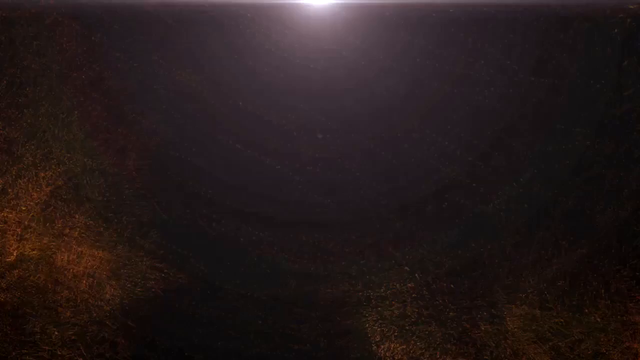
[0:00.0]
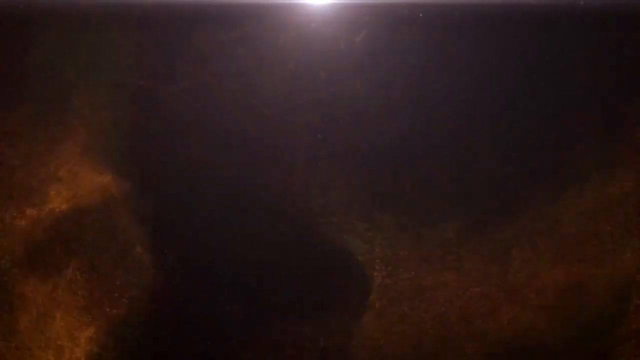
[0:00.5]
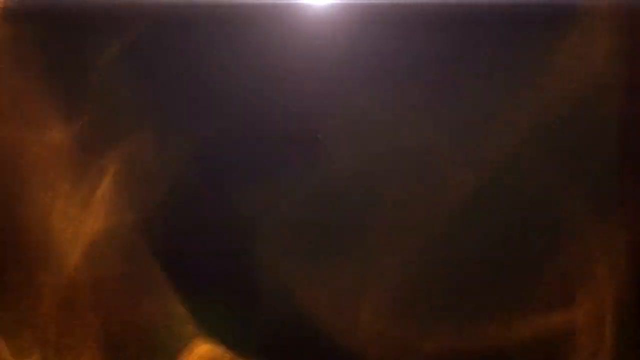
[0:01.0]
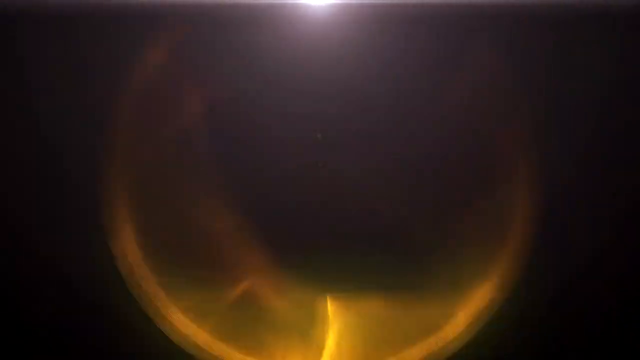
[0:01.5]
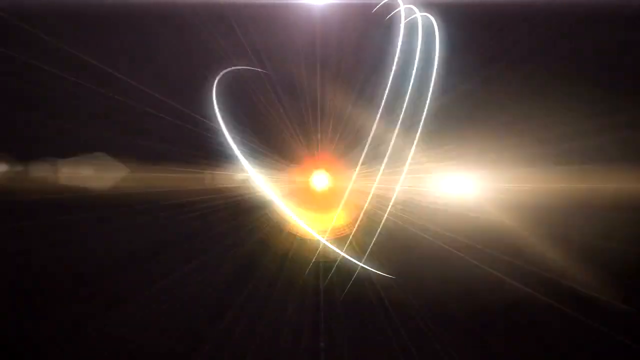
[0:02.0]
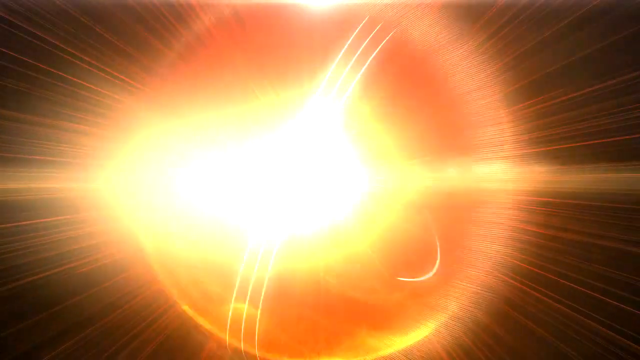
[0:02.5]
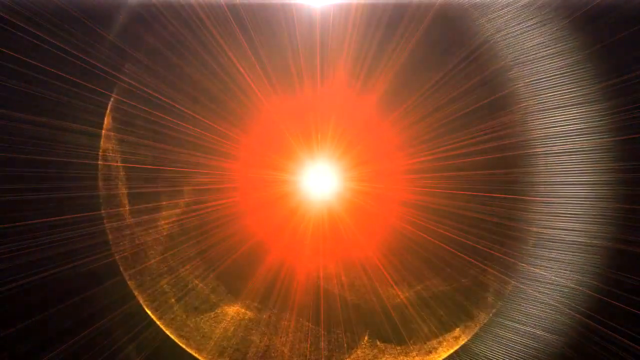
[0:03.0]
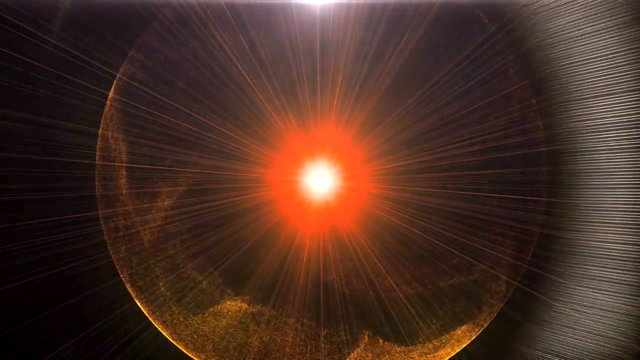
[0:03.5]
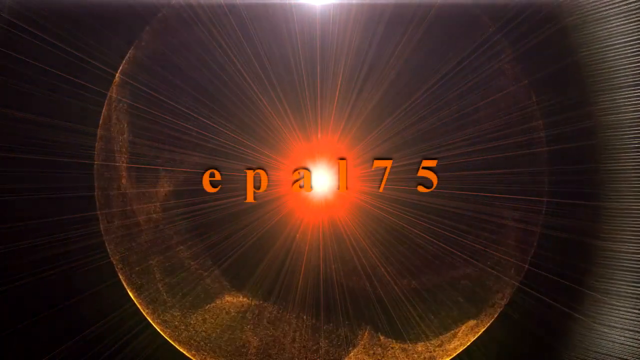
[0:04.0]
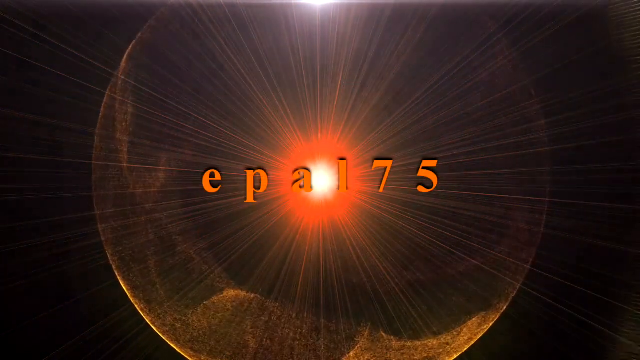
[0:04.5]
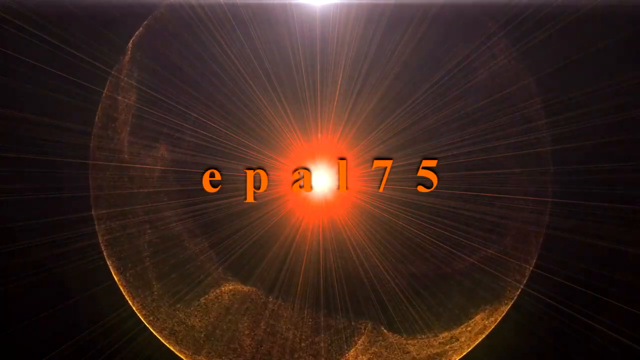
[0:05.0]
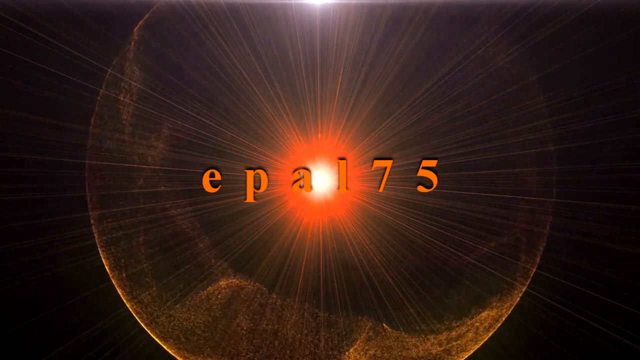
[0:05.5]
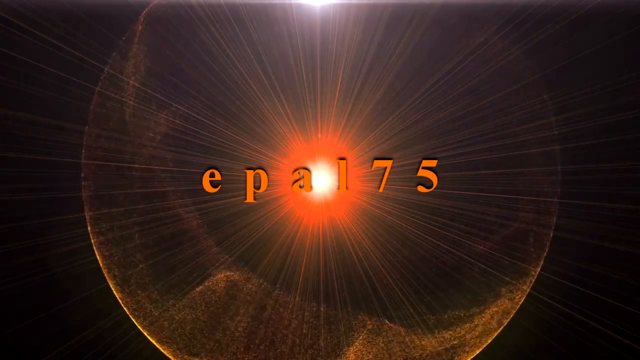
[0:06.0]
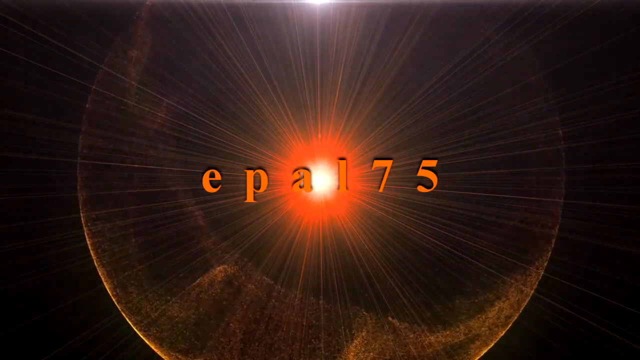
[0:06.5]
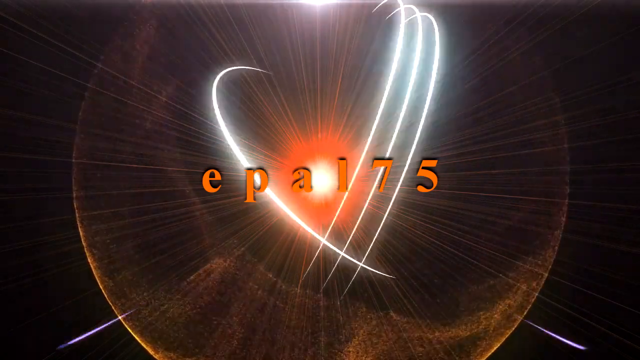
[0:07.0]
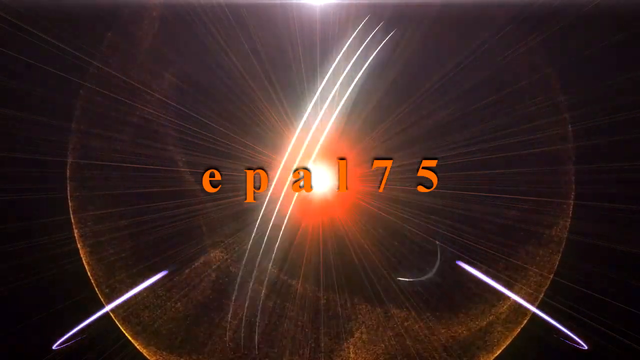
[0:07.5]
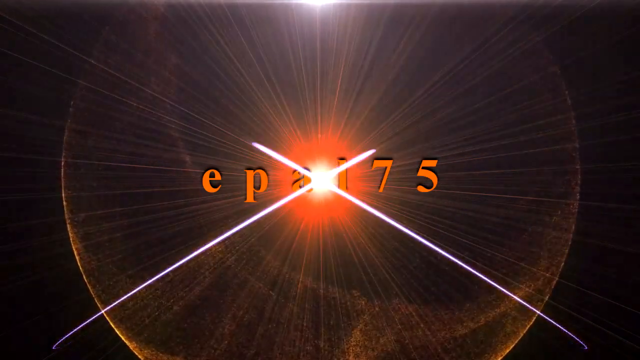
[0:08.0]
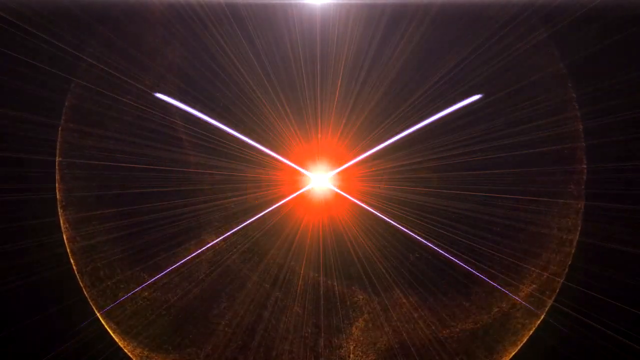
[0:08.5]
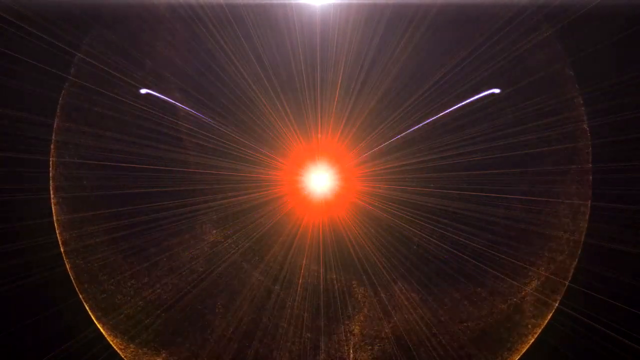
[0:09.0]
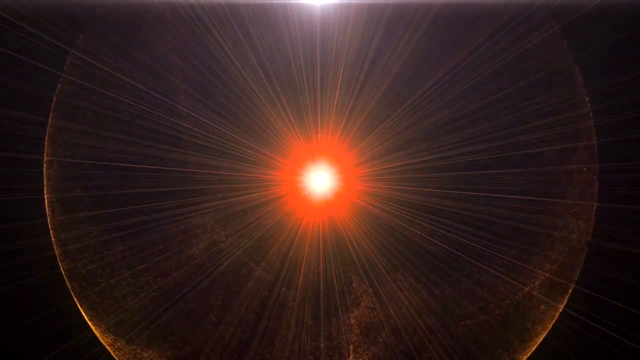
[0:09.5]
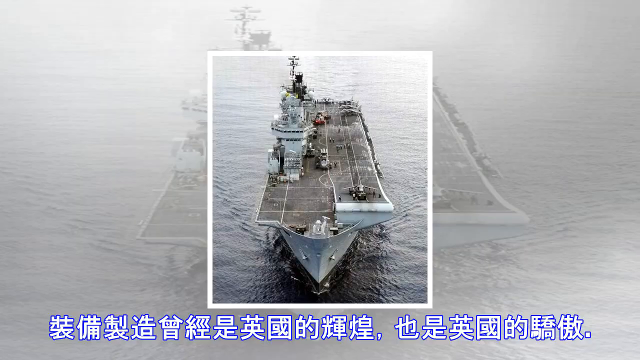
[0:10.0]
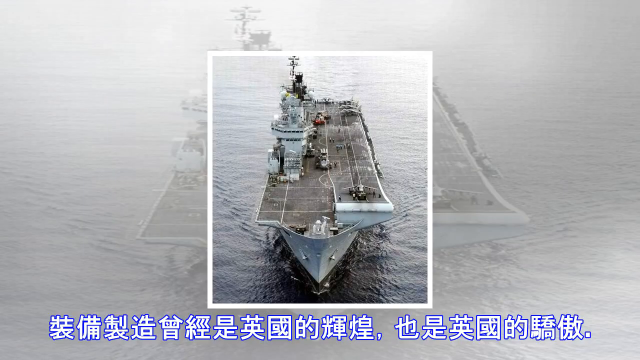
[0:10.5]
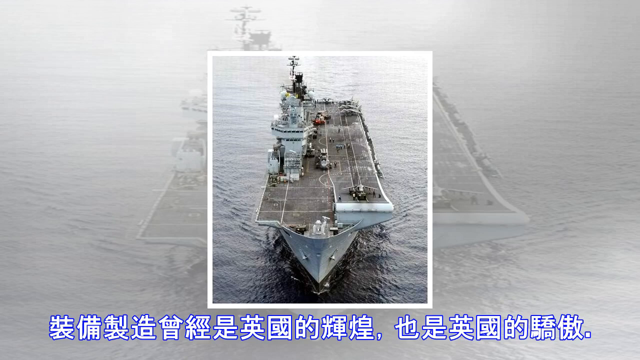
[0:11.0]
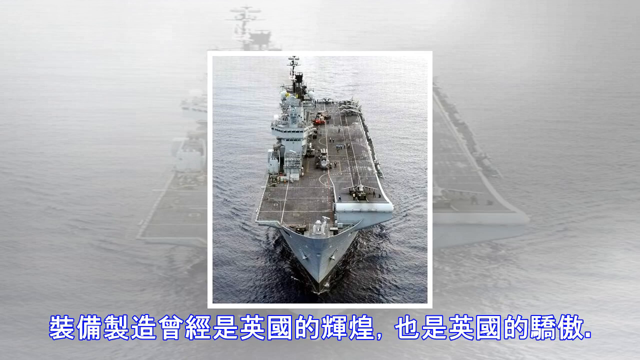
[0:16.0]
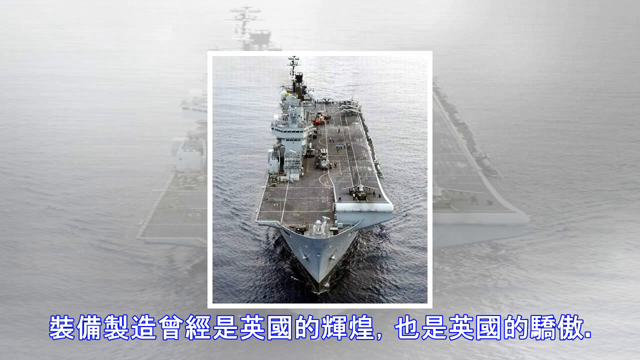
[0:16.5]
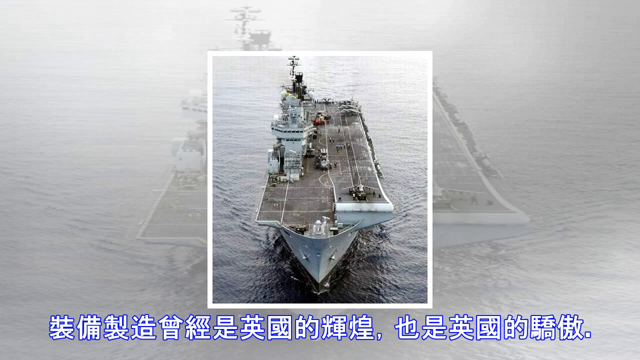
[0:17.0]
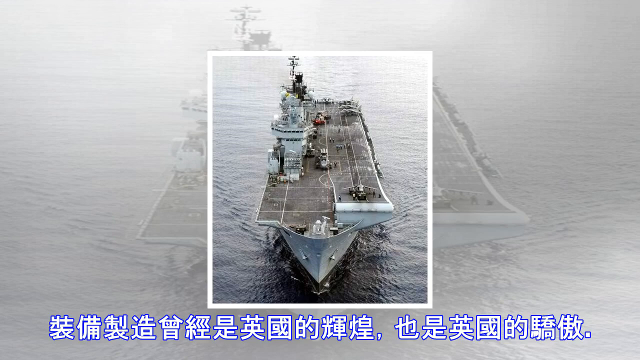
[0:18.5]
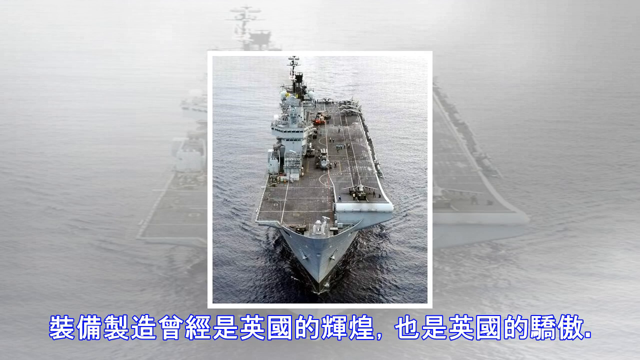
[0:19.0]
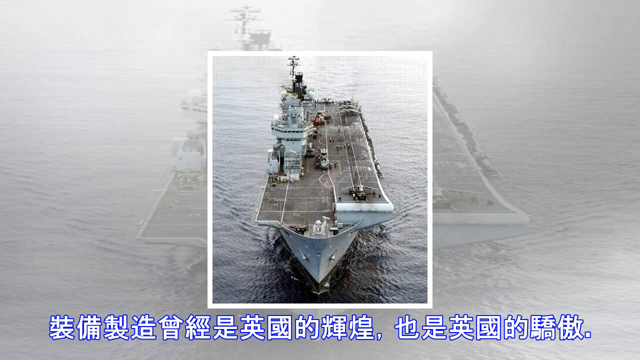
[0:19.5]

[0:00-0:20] A big light forms in the middle of the screen as a flash, and then the text "EPA-175" appears. White lines keep moving through the screen and swirling around its center. In the middle is a very bright white light; the next layer is a very light cream, and the following layer is a very bright red with lines coming off it like sun rays. Behind it is the outline of a circle that could resemble the globe. The video then pans to a mainly gray ship out in the middle of the ocean, apparently some sort of military vessel. On top of the ship is a landing area for airplanes to land and take off. On the left-hand side of the vessel is an area apparently for flight personnel to see what might be coming in, with a lot of glass around half of this building. On the right-hand side is a plane that could be starting to take off, with people standing around it.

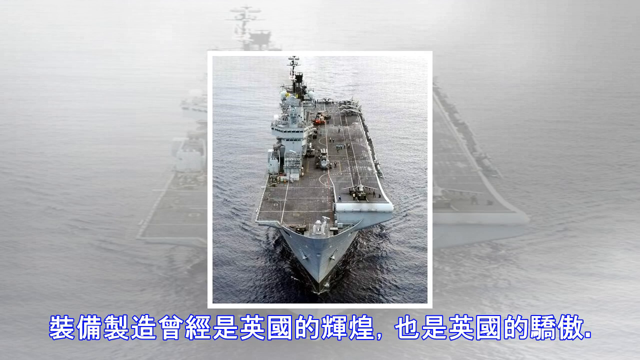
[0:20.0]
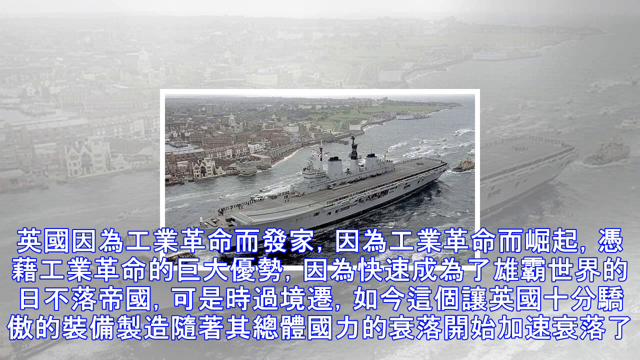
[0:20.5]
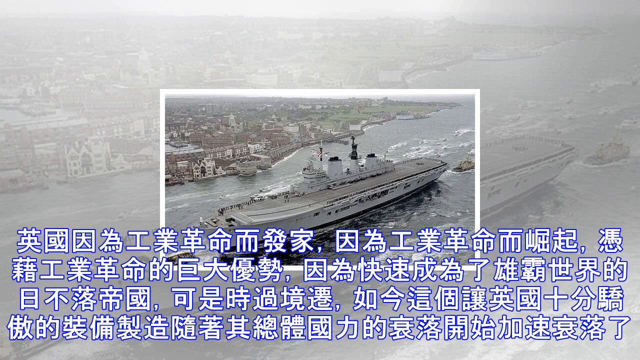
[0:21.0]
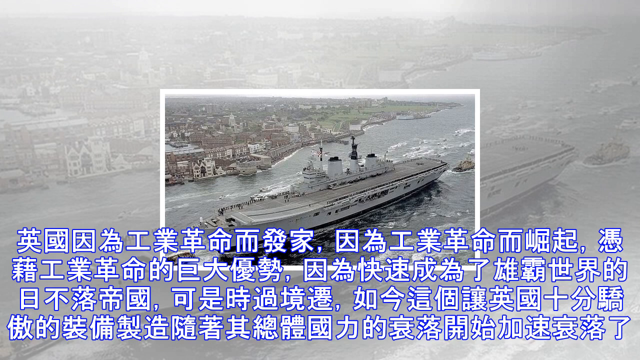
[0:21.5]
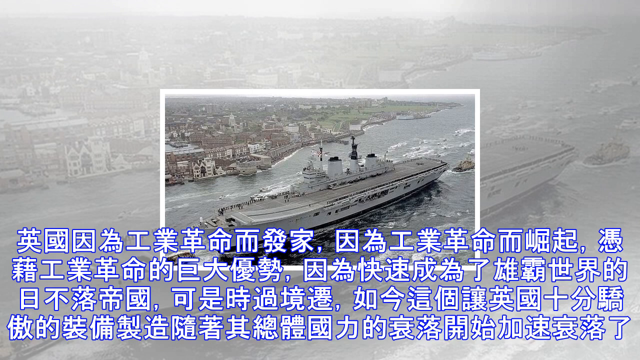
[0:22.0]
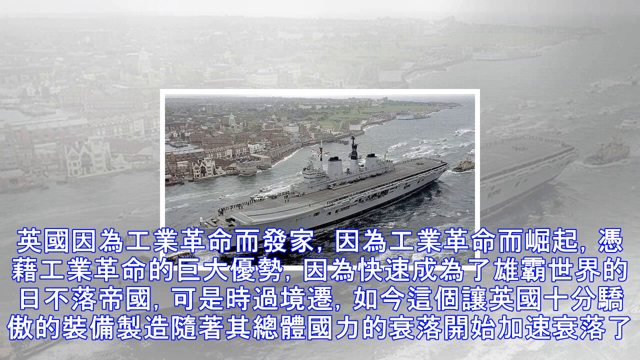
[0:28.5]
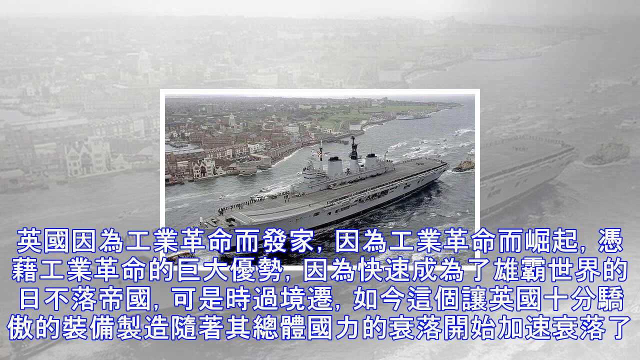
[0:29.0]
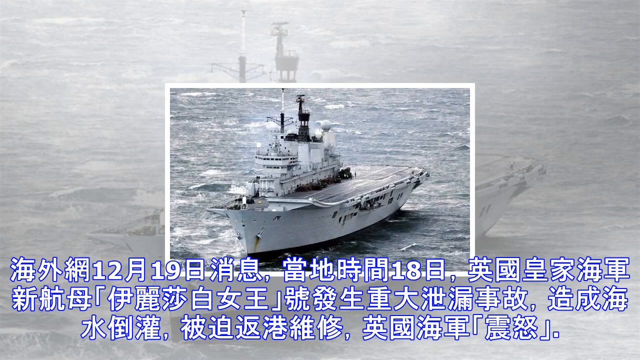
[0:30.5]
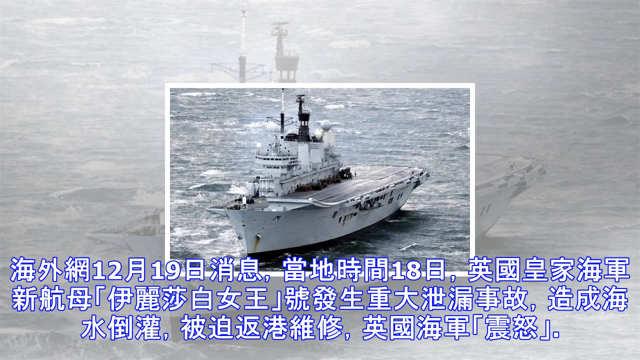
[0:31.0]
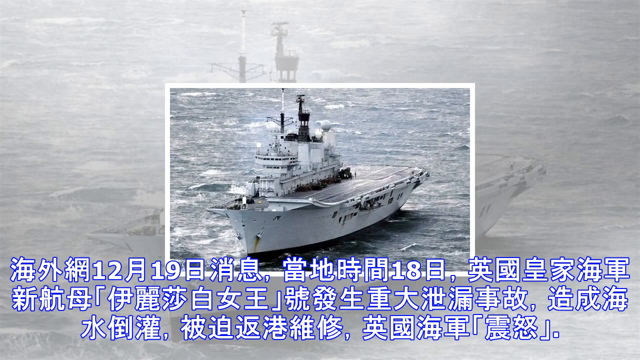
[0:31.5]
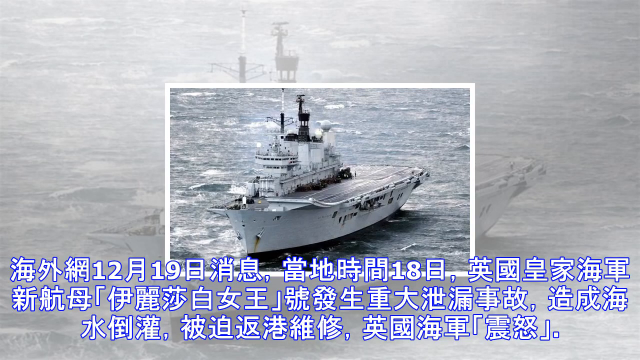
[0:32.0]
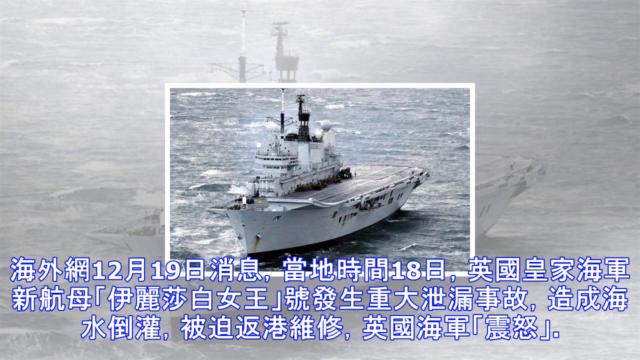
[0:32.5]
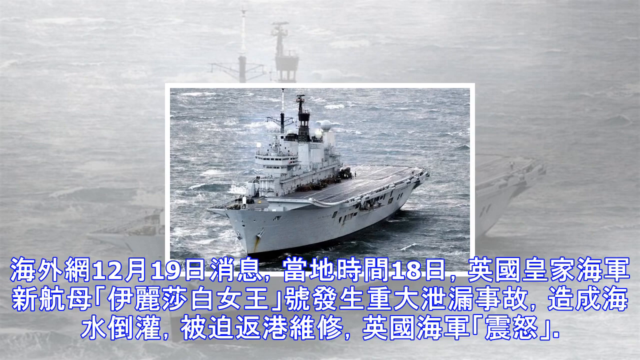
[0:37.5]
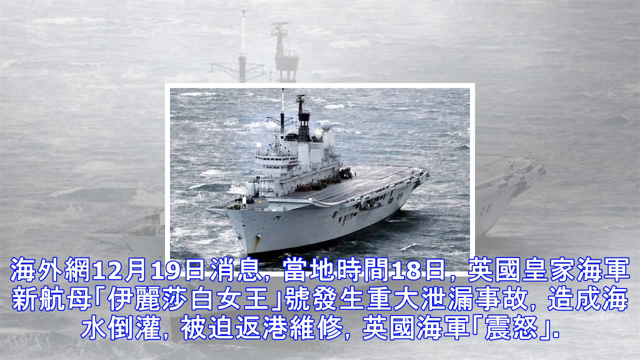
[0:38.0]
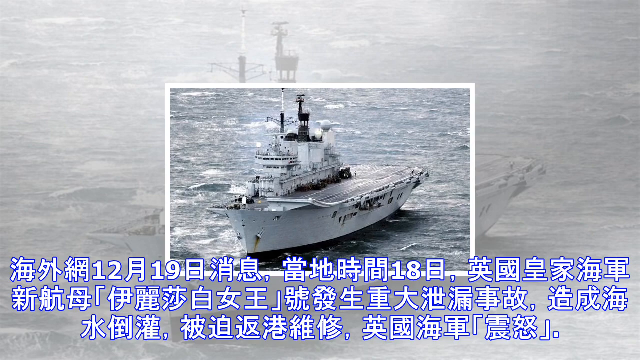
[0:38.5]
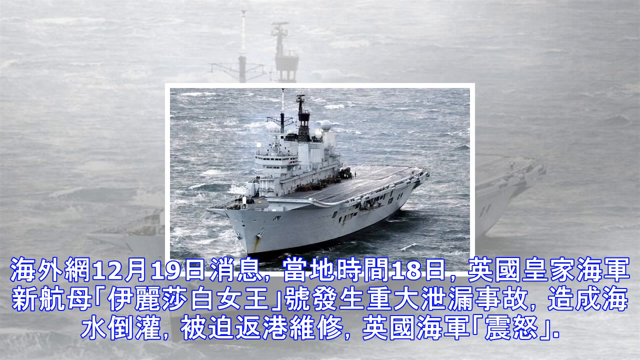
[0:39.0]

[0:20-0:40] Another vessel, mainly white, goes through the middle of a town. It has a landing section for airplanes to land and take off, and there are four different areas on the left-hand side of the vessel, one apparently for watching the planes come in and land. A tugboat is in front of it, apparently helping pull it out into the ocean. The water is white where it falls and splashes. In the background is a big town on the water, most of which seems to be surrounded by the ocean, with many buildings on the ocean side; one building in particular is mainly white and has quite a few windows. The picture of the vessel is outlined in a white square, with Chinese lettering below it. The next picture shows the white vessel out in the middle of the ocean. It is mainly white, with some rust coming down from the front and some rust and black on the side.